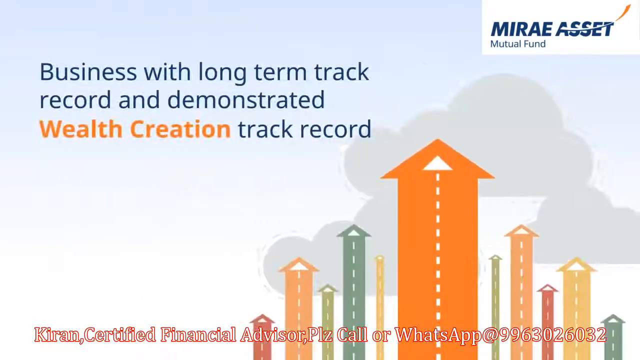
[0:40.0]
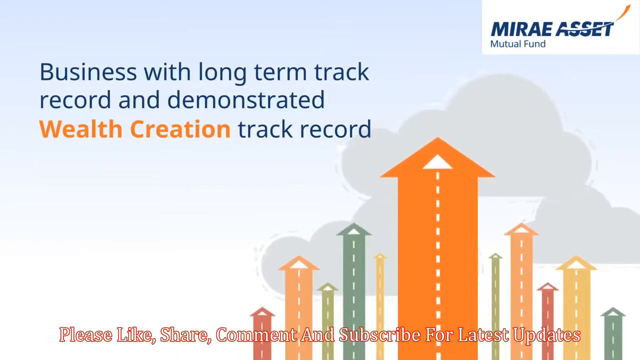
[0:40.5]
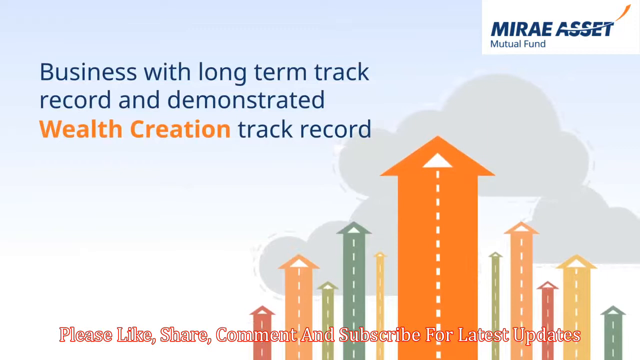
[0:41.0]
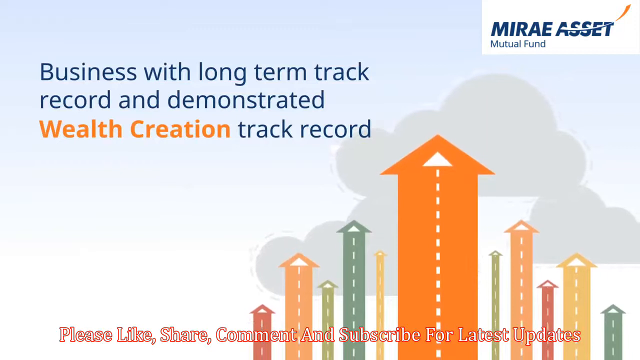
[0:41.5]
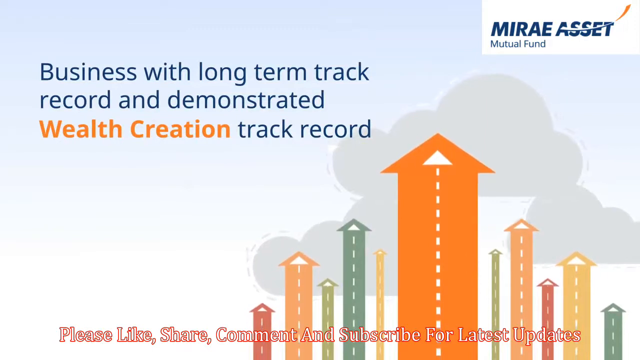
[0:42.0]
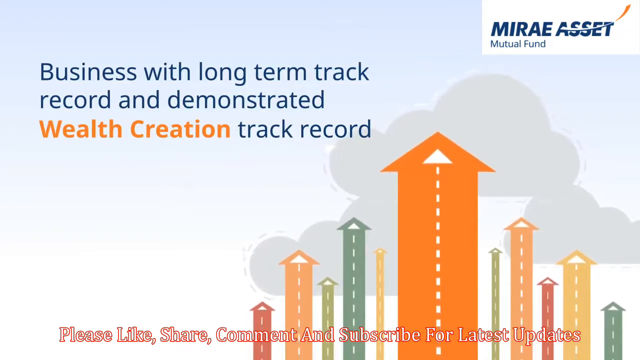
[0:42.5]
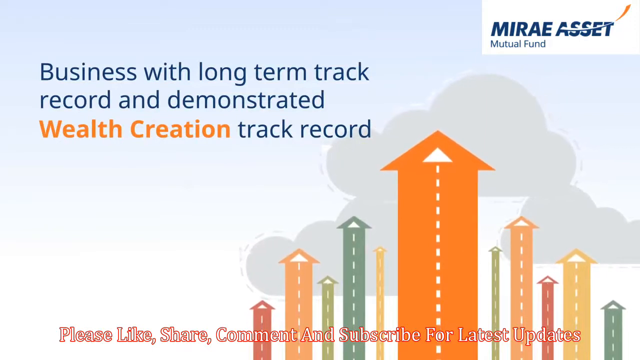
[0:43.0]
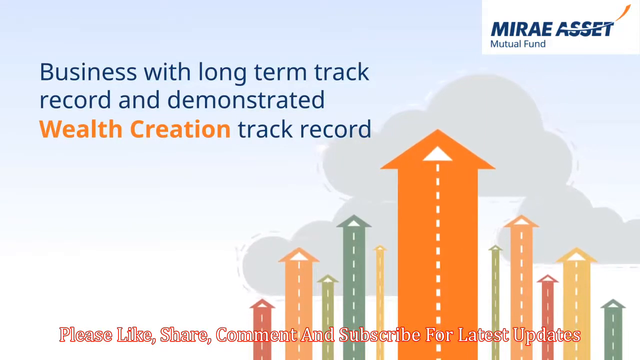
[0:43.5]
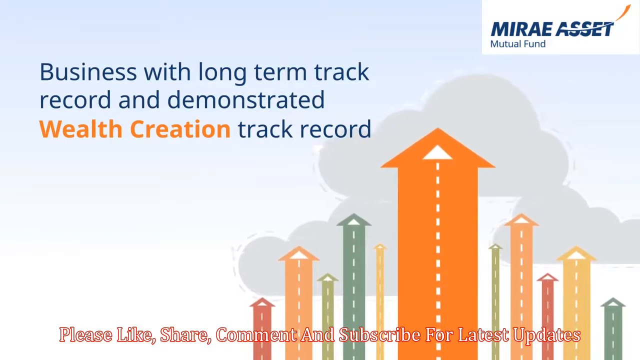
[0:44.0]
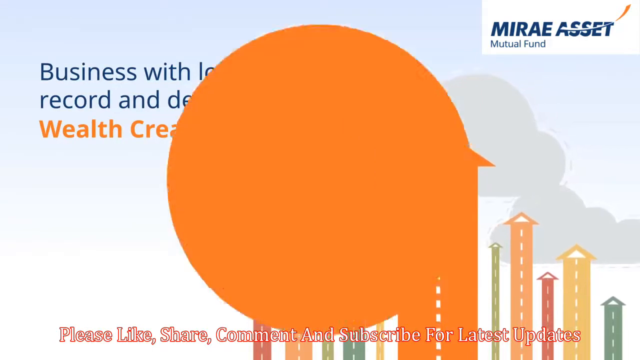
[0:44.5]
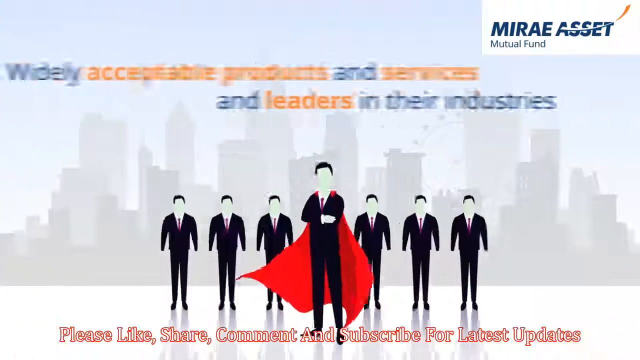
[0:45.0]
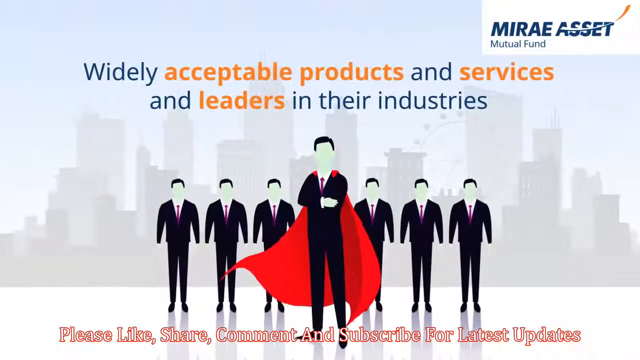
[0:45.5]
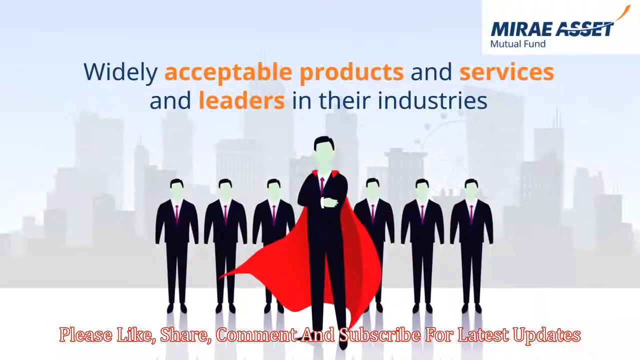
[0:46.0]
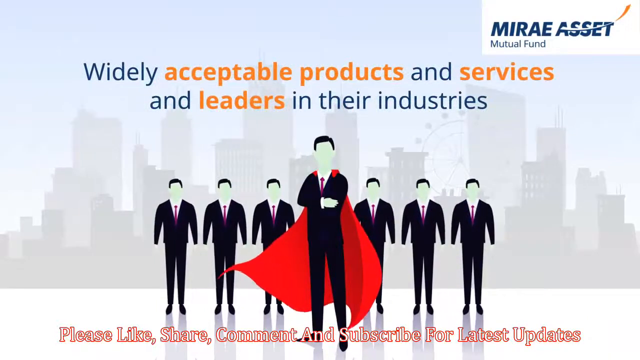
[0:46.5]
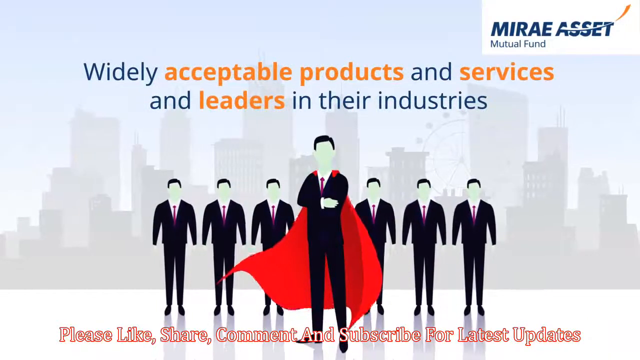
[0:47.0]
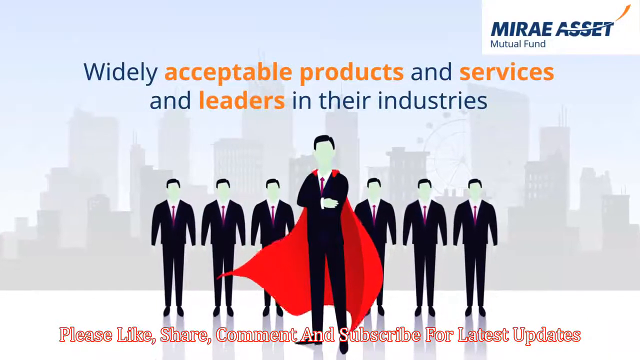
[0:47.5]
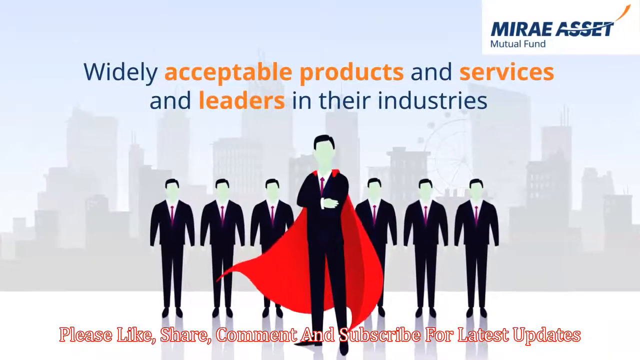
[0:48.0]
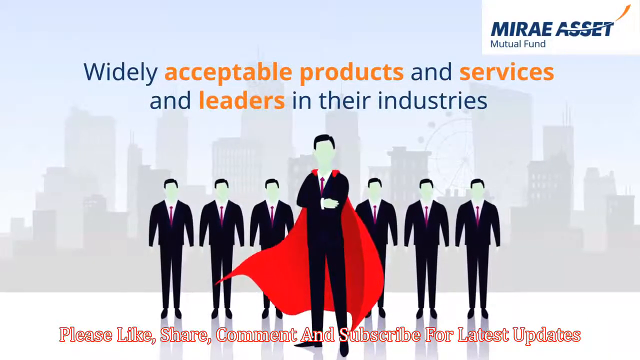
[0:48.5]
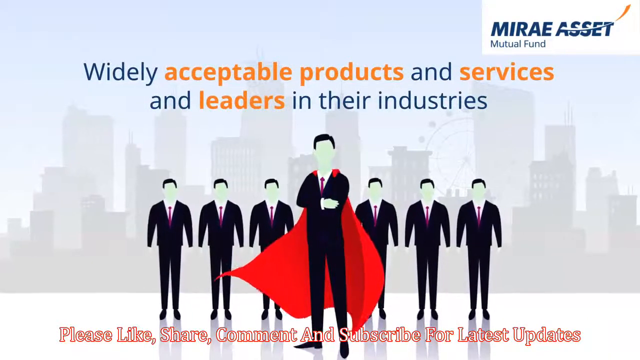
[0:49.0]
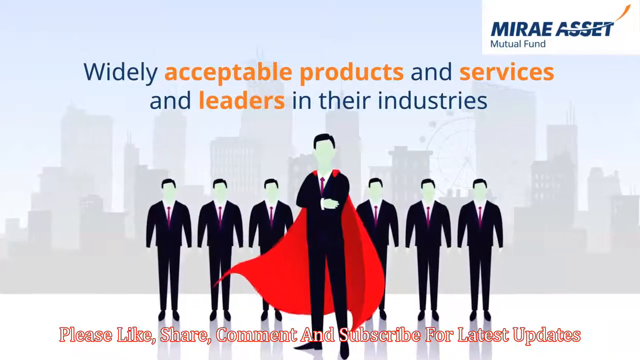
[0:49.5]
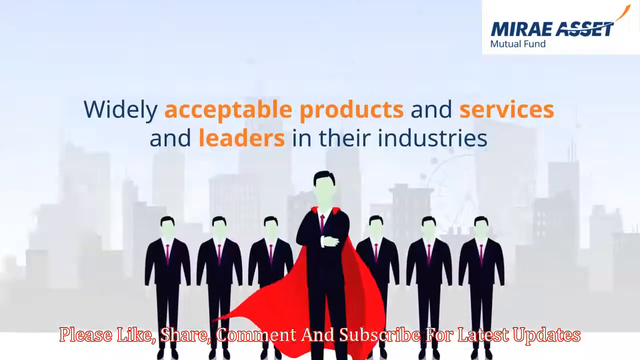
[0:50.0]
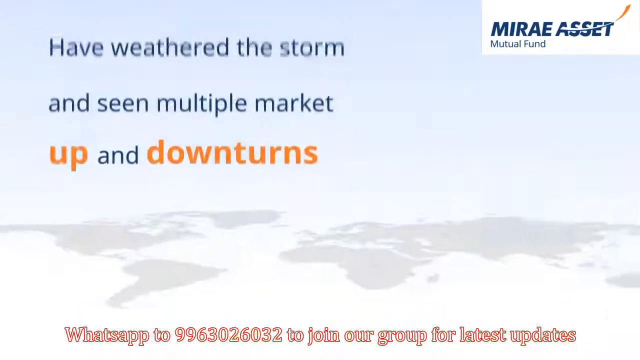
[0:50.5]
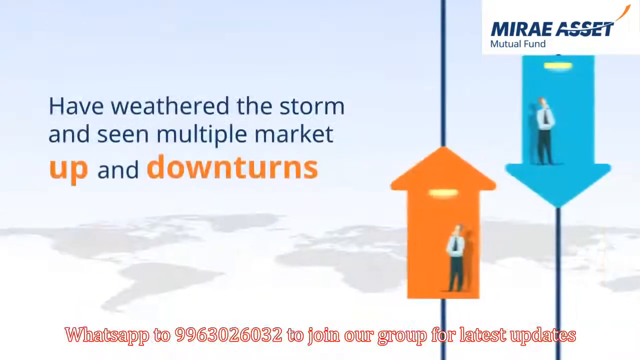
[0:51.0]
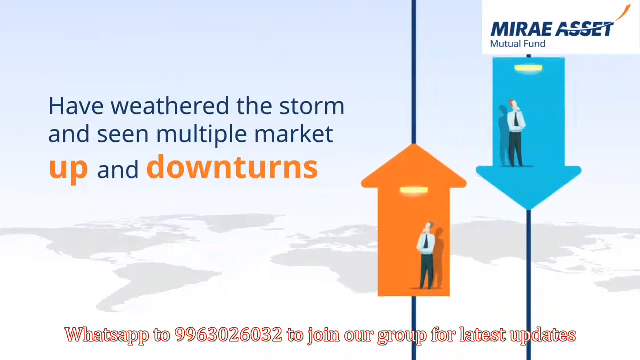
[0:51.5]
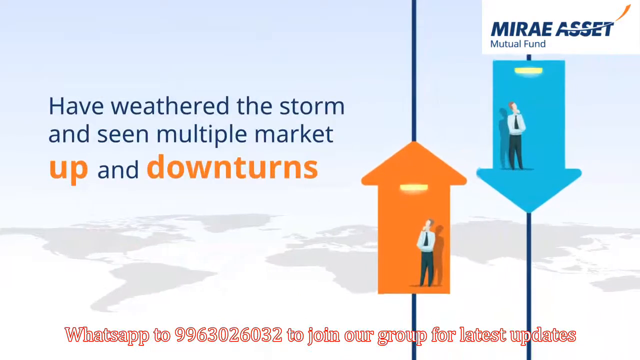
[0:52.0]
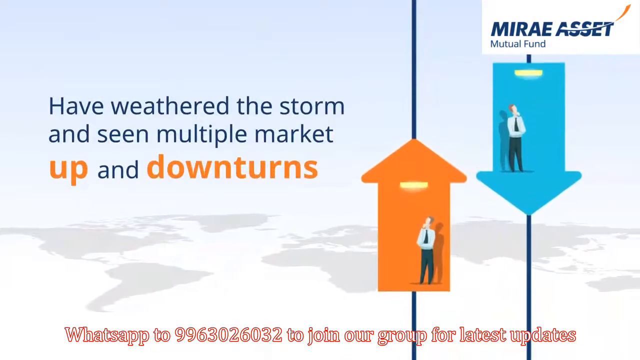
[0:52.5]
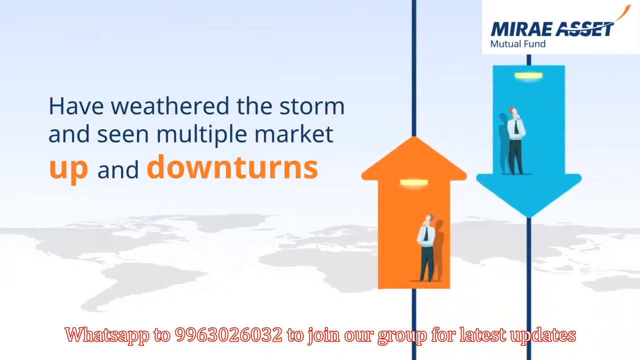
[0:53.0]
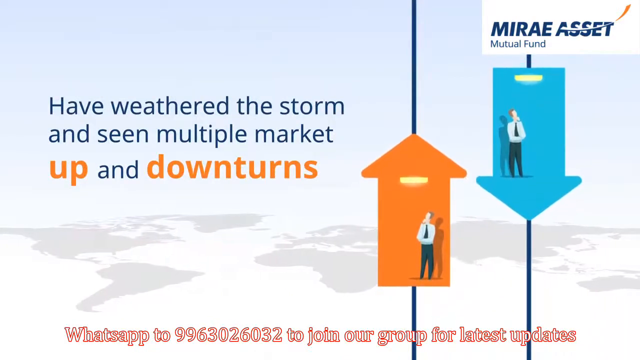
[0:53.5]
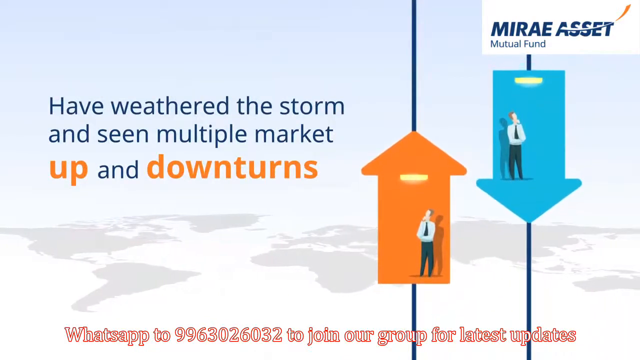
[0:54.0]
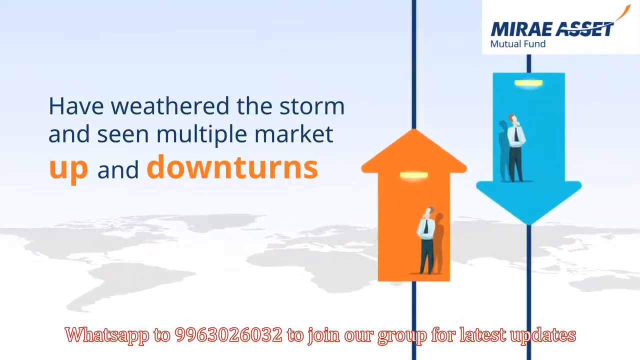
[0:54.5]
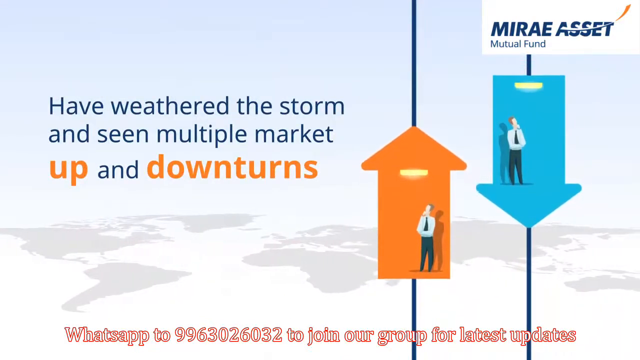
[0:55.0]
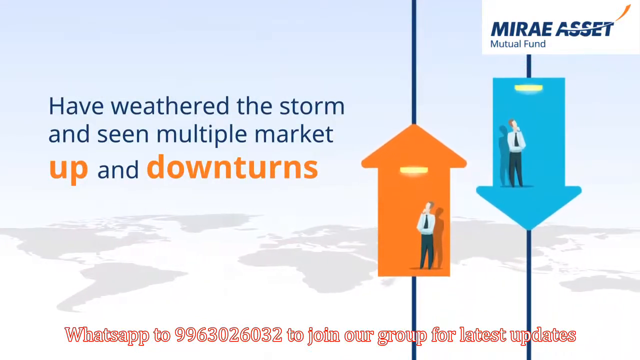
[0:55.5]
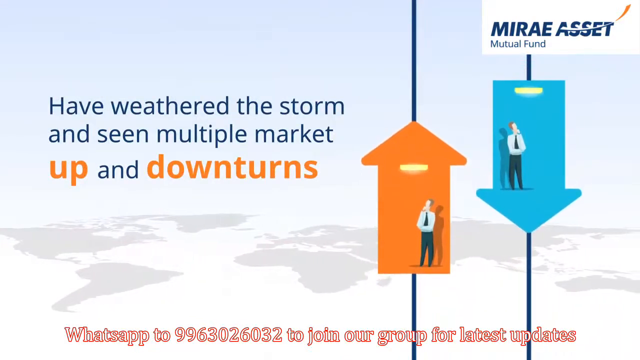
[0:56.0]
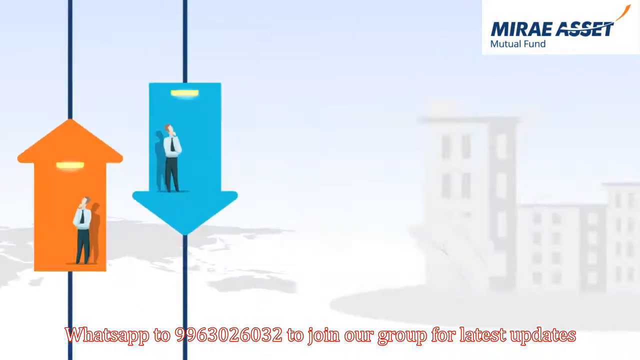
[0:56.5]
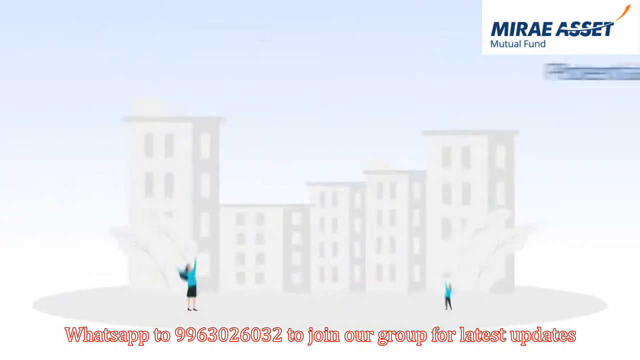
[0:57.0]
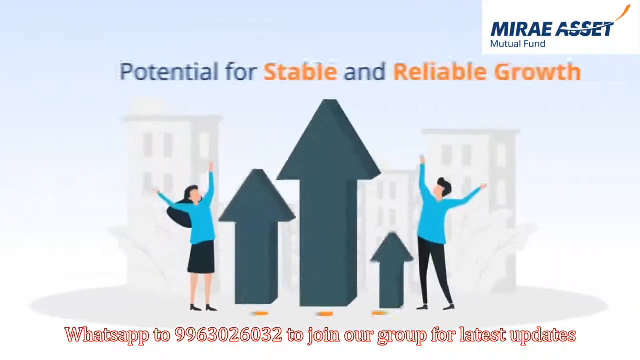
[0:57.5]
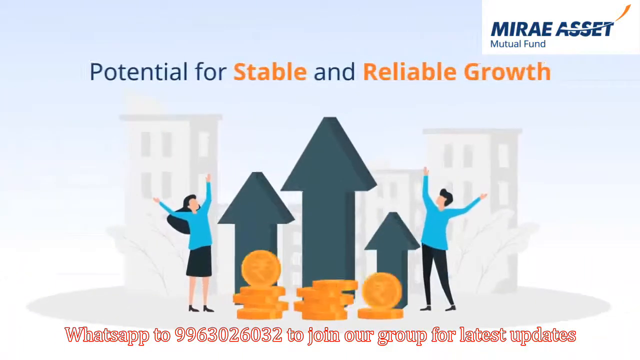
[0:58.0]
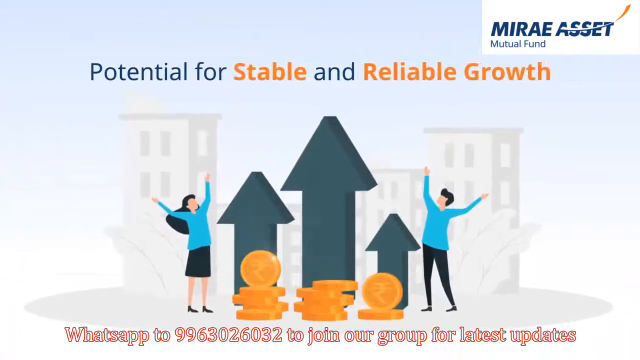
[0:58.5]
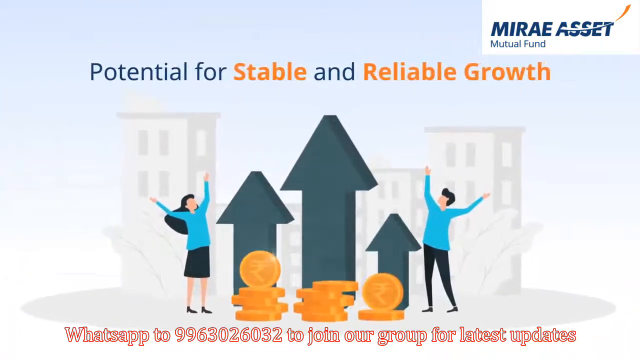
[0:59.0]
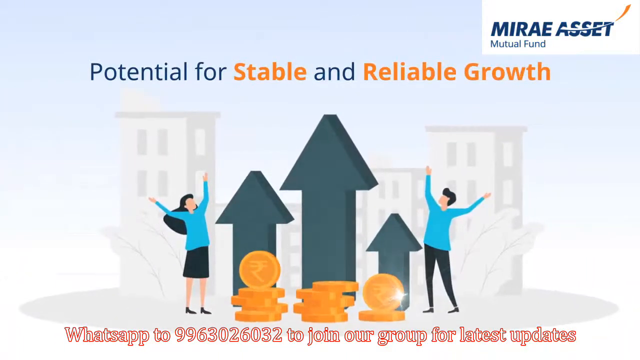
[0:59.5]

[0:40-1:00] A screen reads "business with long term track record and demonstrated wealth creation track record", with "wealth creation" in orange and the rest in blue. The Mirae Asset Mutual Fund logo is in the top right-hand corner. There appear to be gray puffy clouds on the right-hand side and center, with icons of wide arrows pointing up; the widest is orange with white dots going down, and several smaller ones of various shapes, widths and lengths branch out to its right and left, all with dashed upward-pointing arrows, in orange, green and yellow. Text at the bottom reads "please share like and comment subscribe now for latest updates". Then a screen reads "widely acceptable products and services and leaders in their industries", showing someone who looks like a vampire in the center of a group of suited men. In the next scene the vampires stand in line; the man in front wears a red cape, and all have green faces, black suits and red ties. The next screen reads "have weathered the storm and seen multiple market up and downturns", with "up and downturns" larger and in orange. A faded aerial view of the world in very faint shades of gray is in the background. Two wide arrow icons have men standing in them in shirts, ties and dress pants: the left one is a wide orange arrow pointing up, connected by a black line at its top and bottom, and the right one, slightly higher, is blue, points down and is also connected by a black line. Finally, a screen reads "potential for stable and reliable growth", with two people standing in the center and a building in the background.